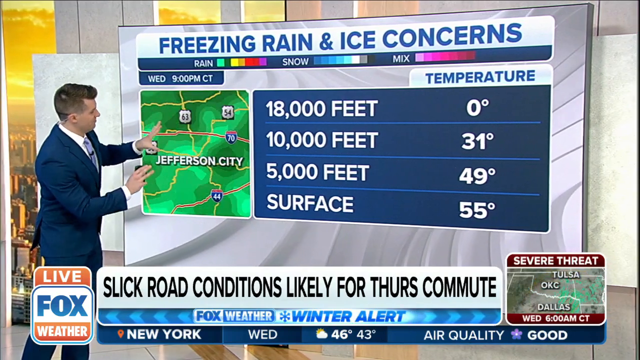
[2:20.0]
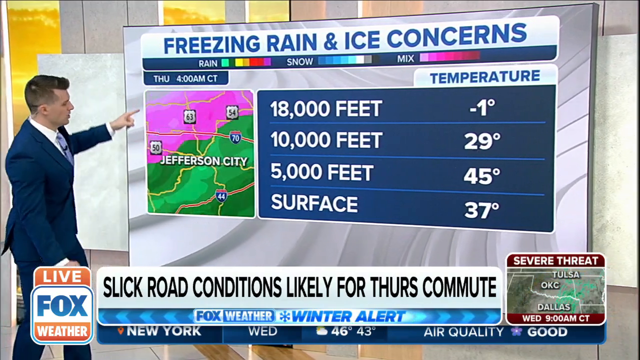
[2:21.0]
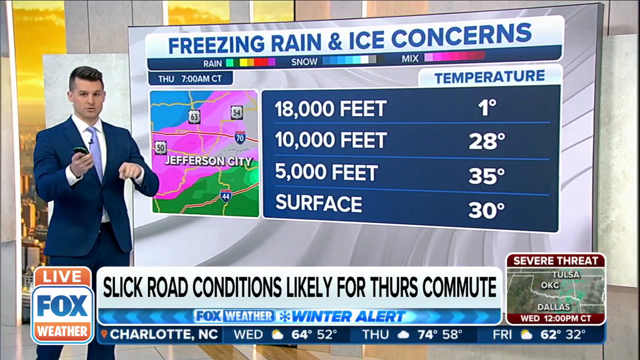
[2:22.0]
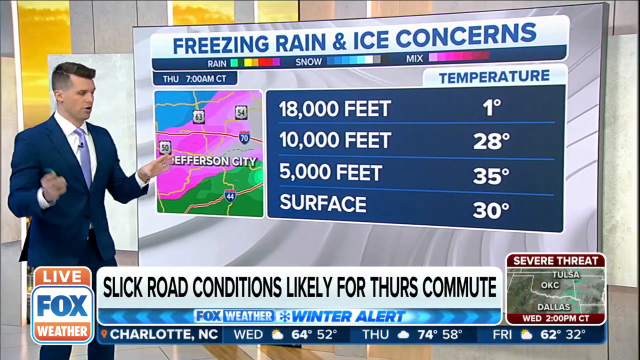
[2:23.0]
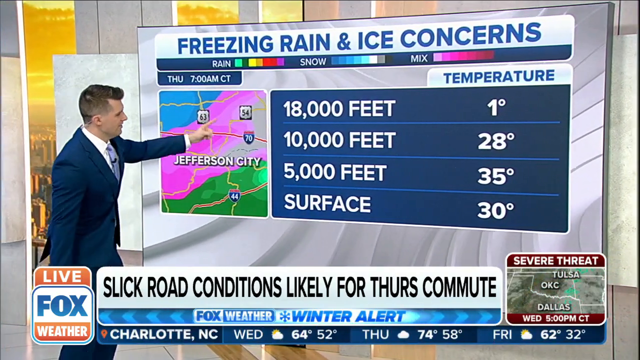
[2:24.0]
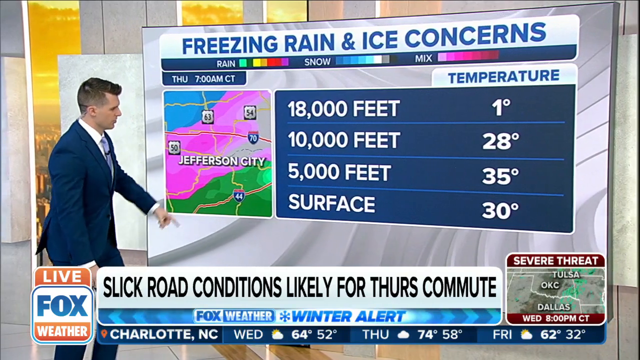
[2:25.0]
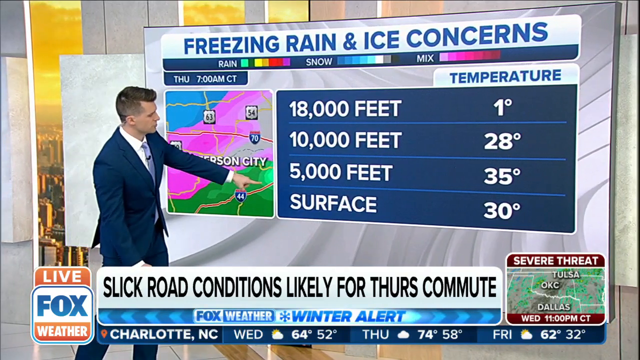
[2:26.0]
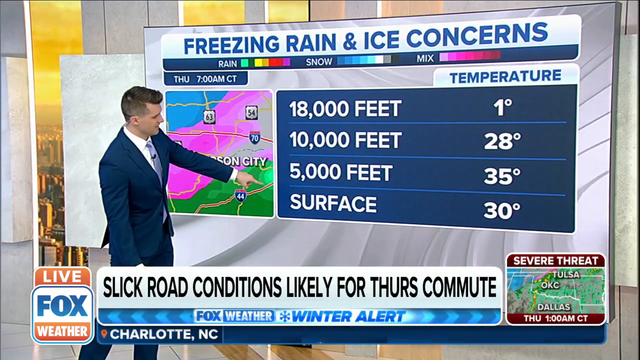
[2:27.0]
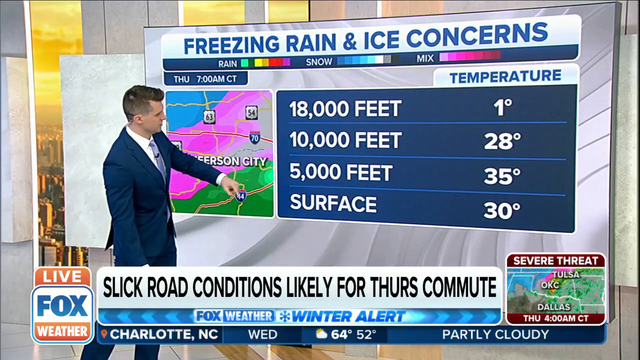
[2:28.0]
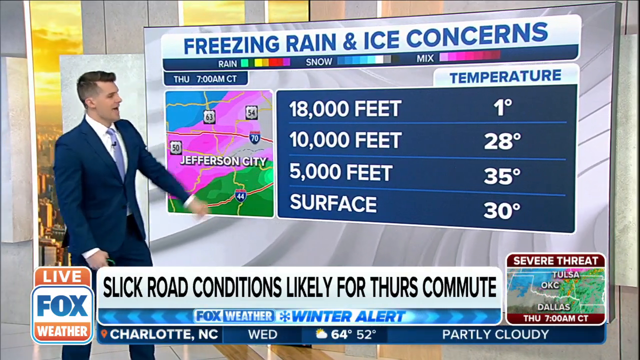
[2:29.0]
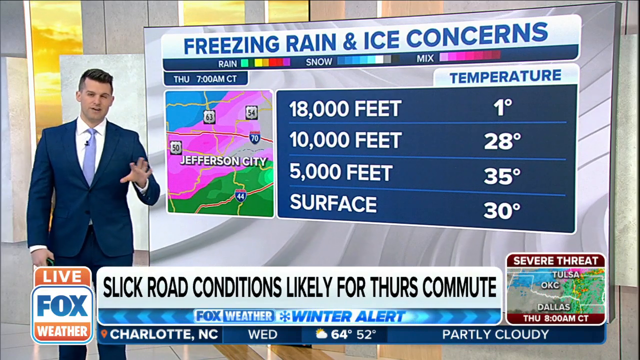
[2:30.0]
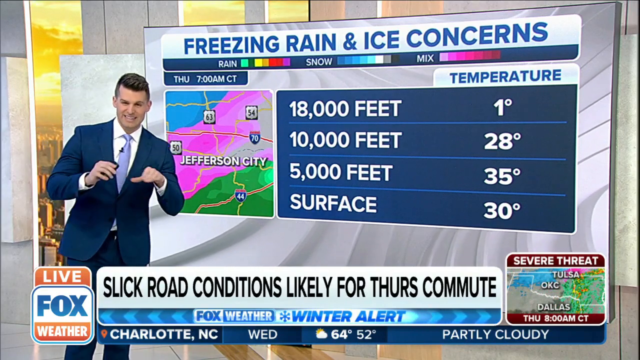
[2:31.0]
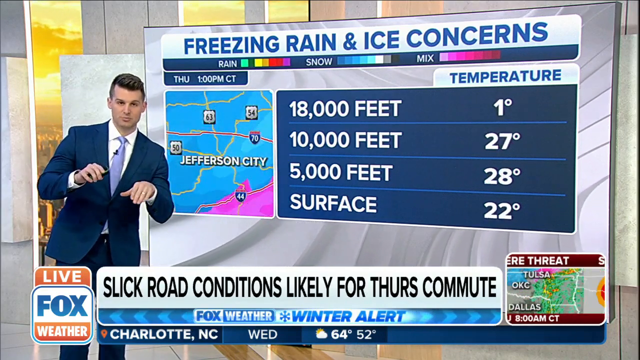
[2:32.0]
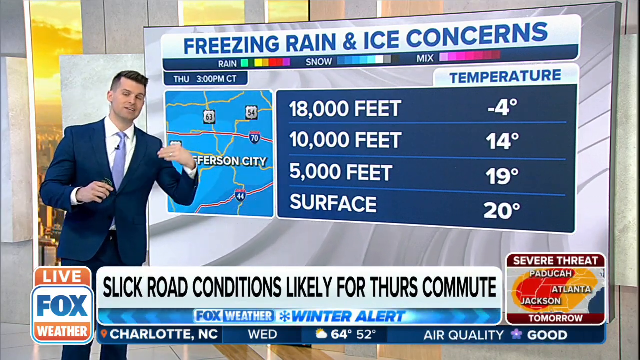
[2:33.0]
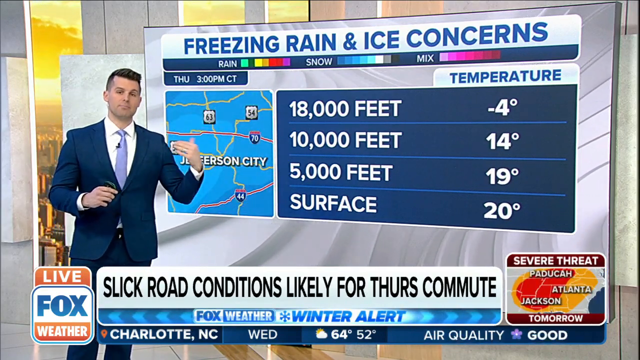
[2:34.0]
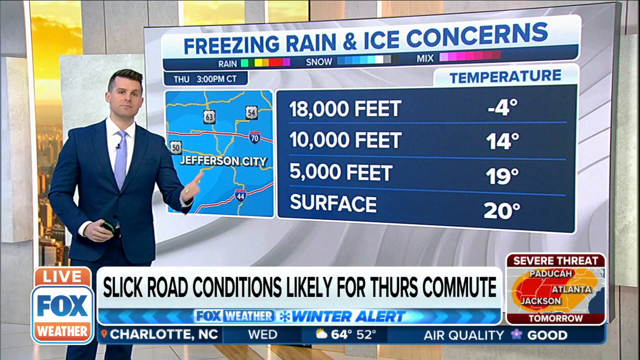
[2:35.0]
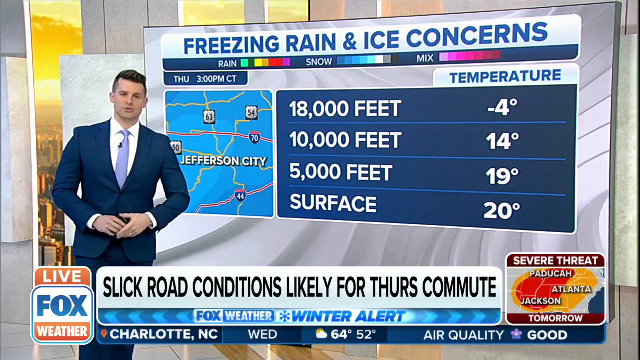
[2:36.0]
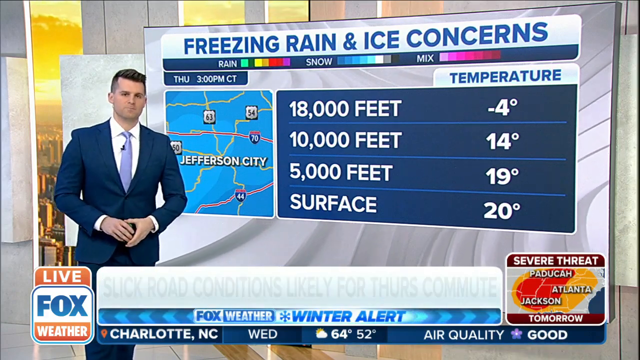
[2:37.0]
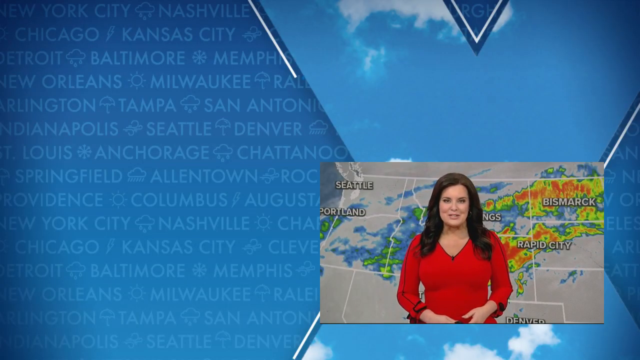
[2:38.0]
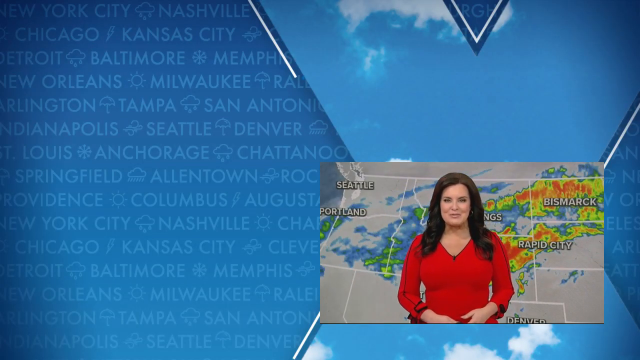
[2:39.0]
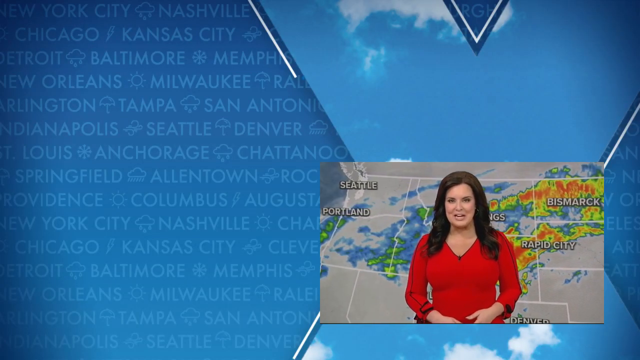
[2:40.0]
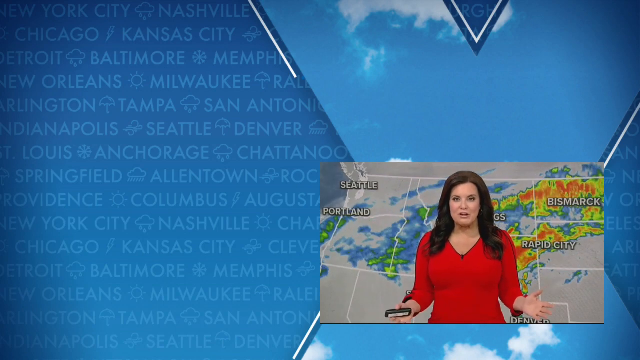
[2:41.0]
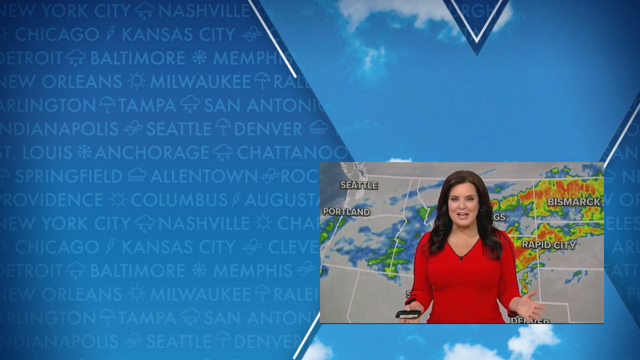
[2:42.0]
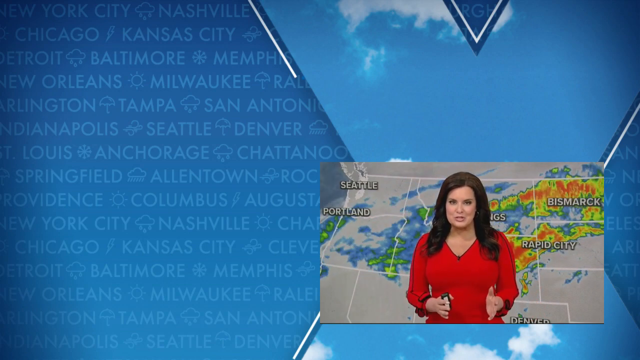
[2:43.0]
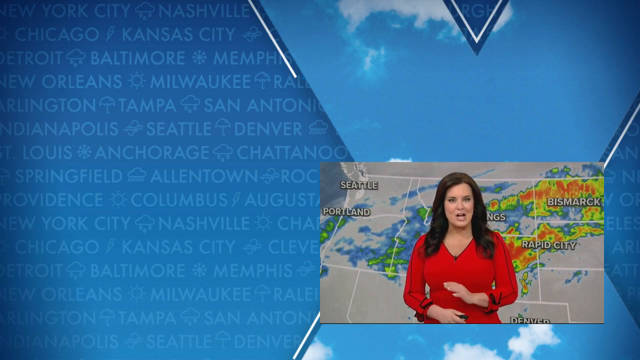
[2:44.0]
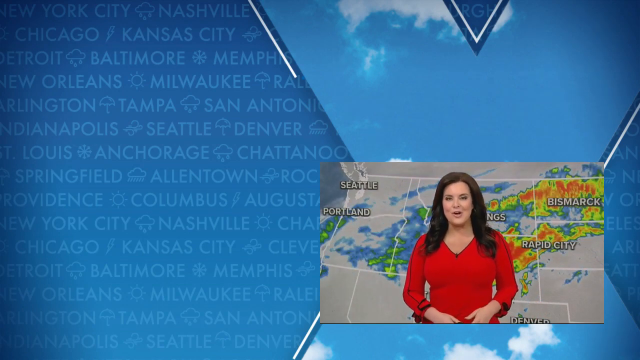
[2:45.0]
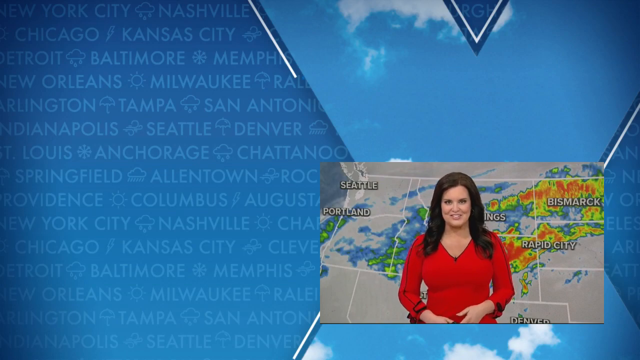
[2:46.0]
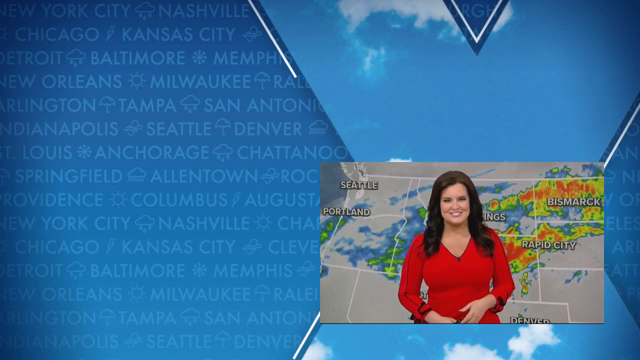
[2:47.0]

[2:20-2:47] The meteorologist stands at the board, indicating an ice and snow precipitation mix over Jefferson City, apparently in Colorado. The board gives information over time from Thursday morning into the afternoon, around 2 p.m. Central Standard Time. For 3 p.m. Central Standard Time on Thursday at Jefferson City, temperatures are minus 4 degrees Fahrenheit at 18,000 feet, 14 degrees at 10,000 feet, 19 degrees at 5,000 feet, and 20 degrees at the surface. The broadcast then moves to a different report: a smiling woman stands in front of what looks like the western half of the country, with a red blouse behind her. The weather appears to be moving away from the western half of the country, with a storm moving from Washington and Oregon over Idaho into Montana and North Dakota. She uses hand gestures to point out the weather in the northwest.